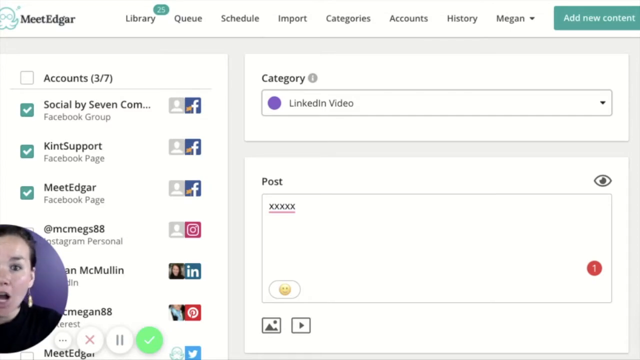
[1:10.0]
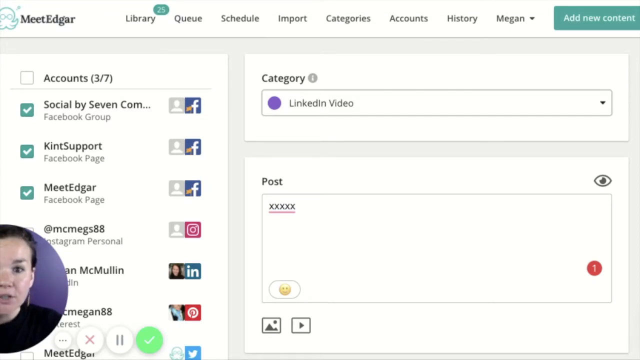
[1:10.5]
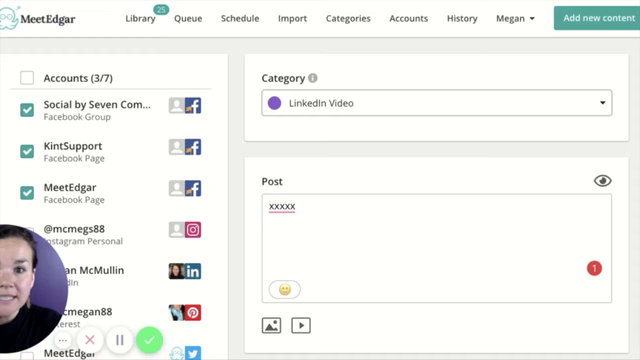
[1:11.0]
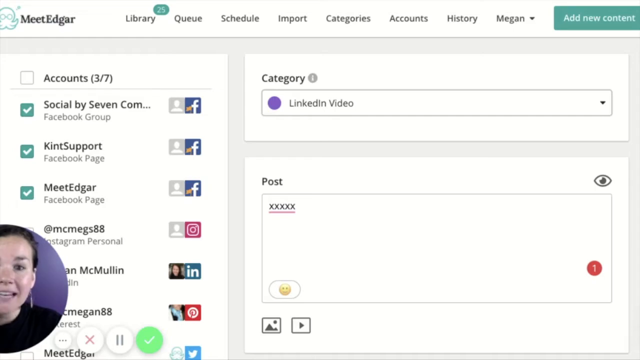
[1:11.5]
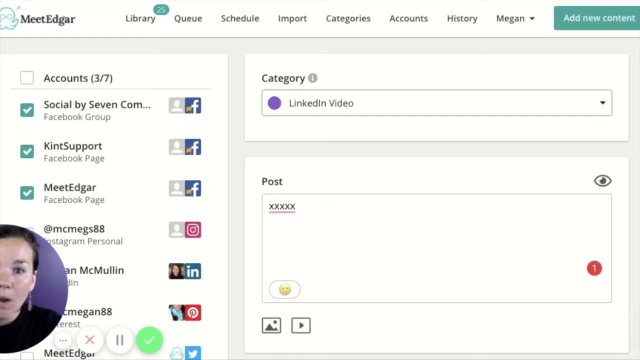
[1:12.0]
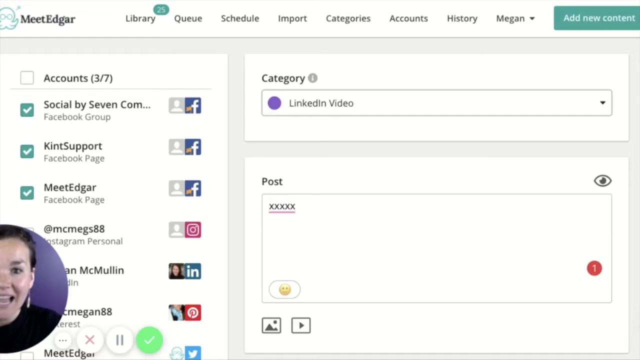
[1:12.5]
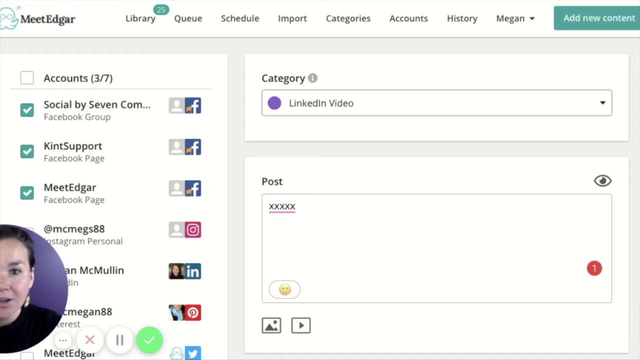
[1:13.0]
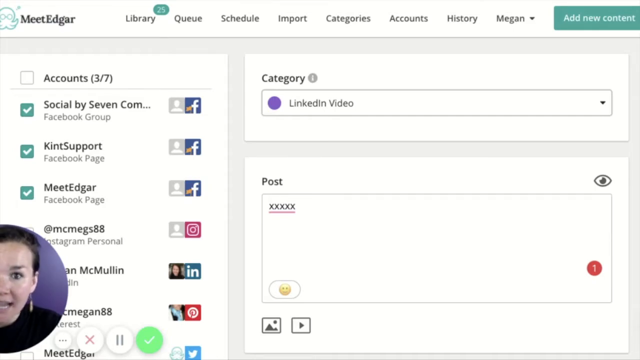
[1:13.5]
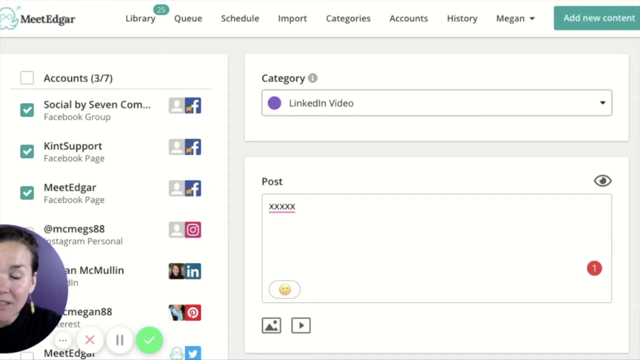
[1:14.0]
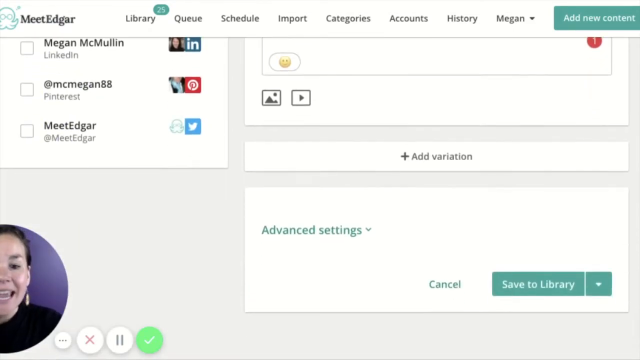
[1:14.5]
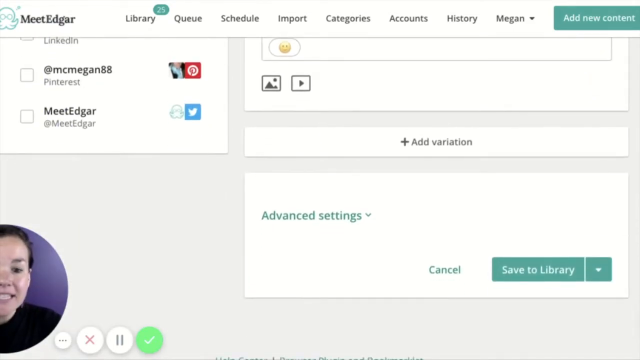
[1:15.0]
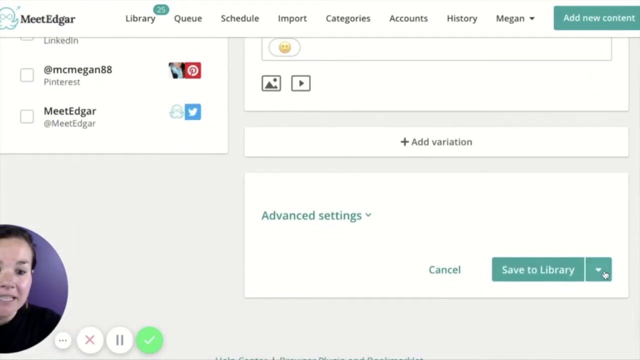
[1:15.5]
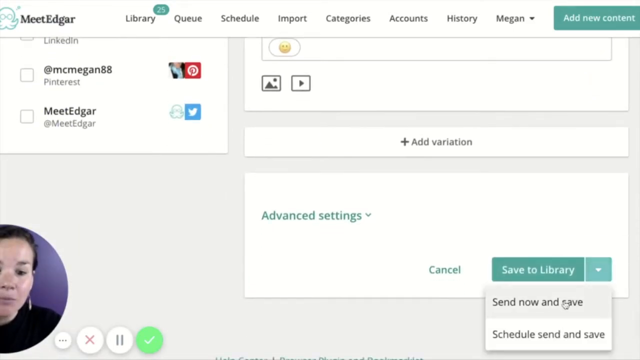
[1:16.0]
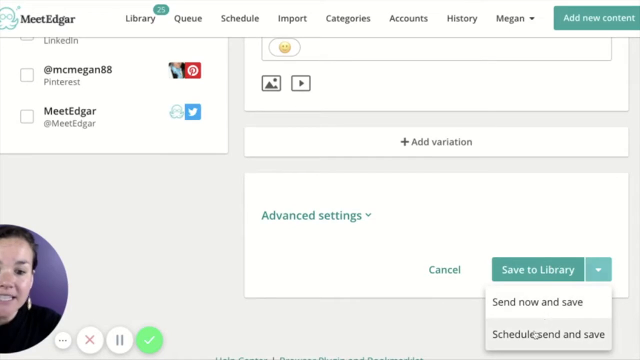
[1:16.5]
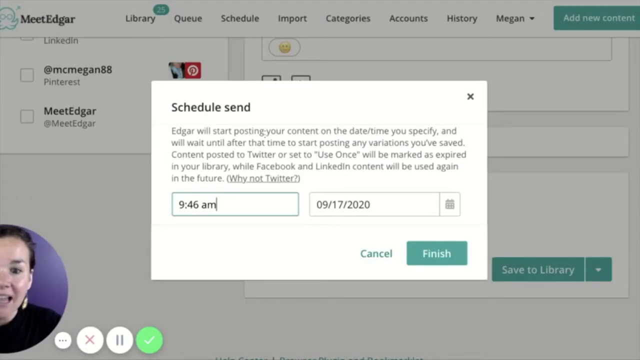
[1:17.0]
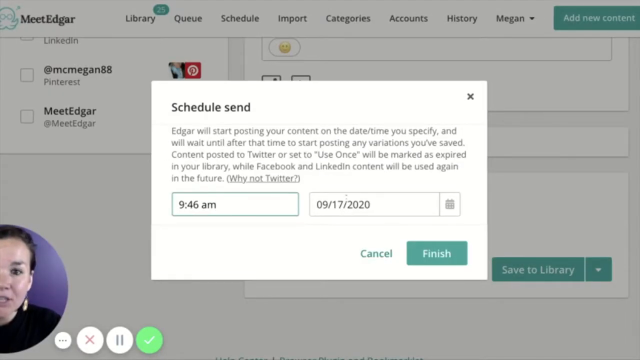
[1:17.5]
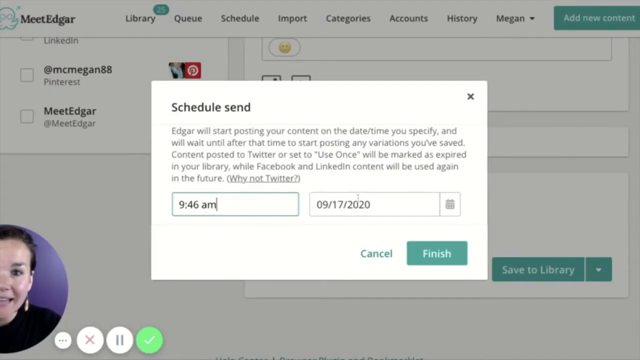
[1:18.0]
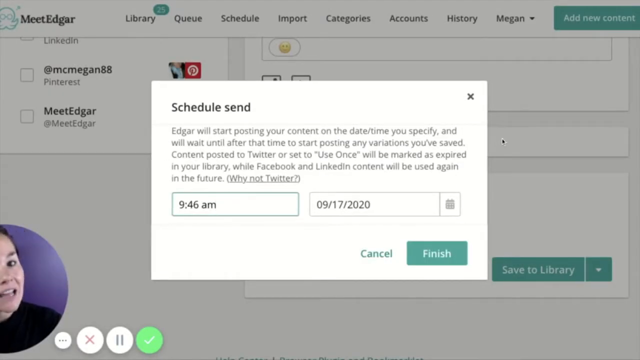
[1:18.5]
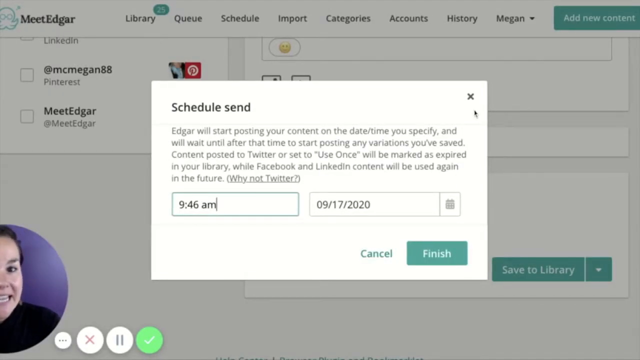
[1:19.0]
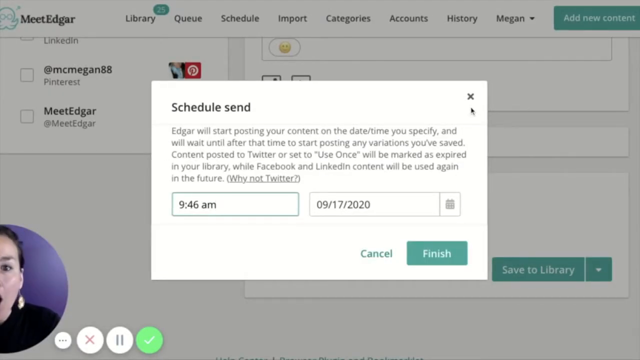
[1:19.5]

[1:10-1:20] The dark-haired woman continues to speak from the bottom left corner of the screen. In the top left corner is an animated icon with the text "MeetEdgar" to its right. Further right are the platform's sections: Library, Queue, Schedule, Import, Categories, Accounts, History, and Megan, possibly the name of the black-haired woman. She appears to go over the post scheduling process again, briefly showing the "Save to Library" button and the time and date in the "Schedule send" section.